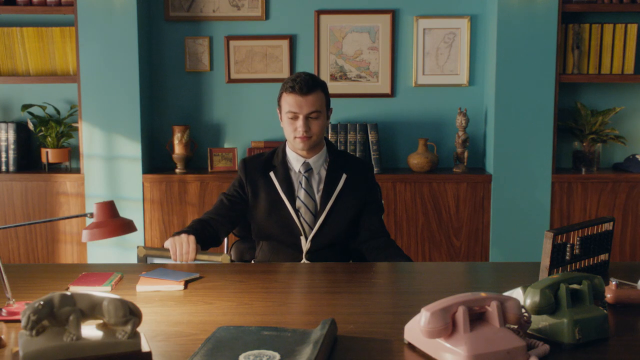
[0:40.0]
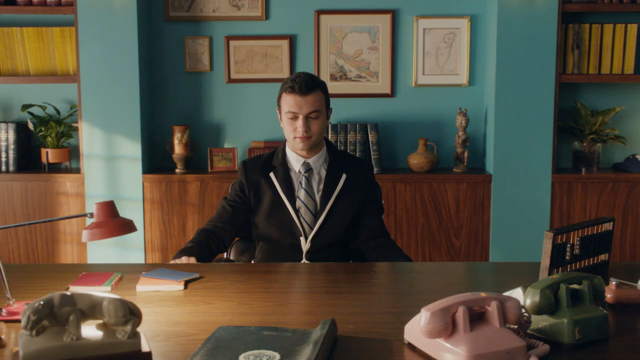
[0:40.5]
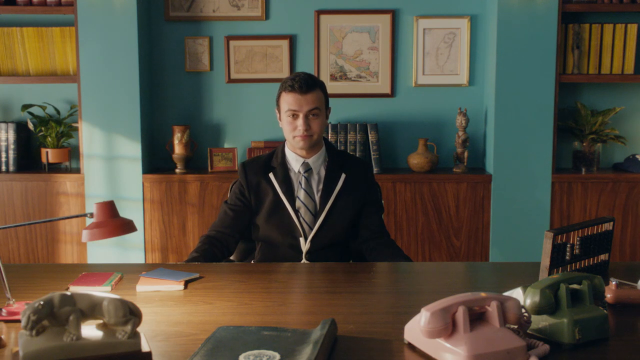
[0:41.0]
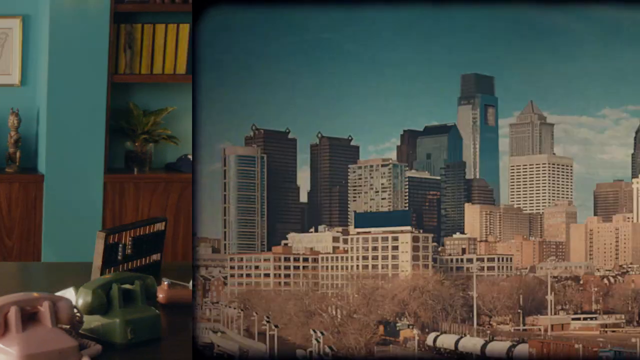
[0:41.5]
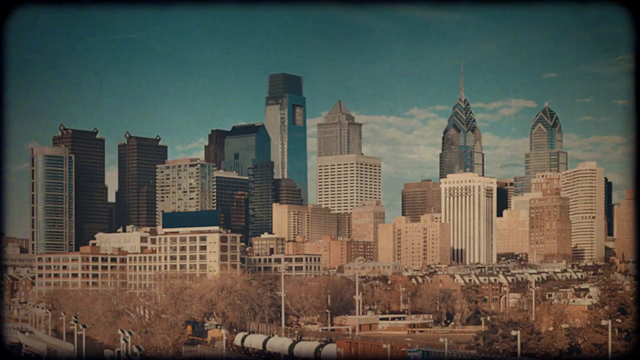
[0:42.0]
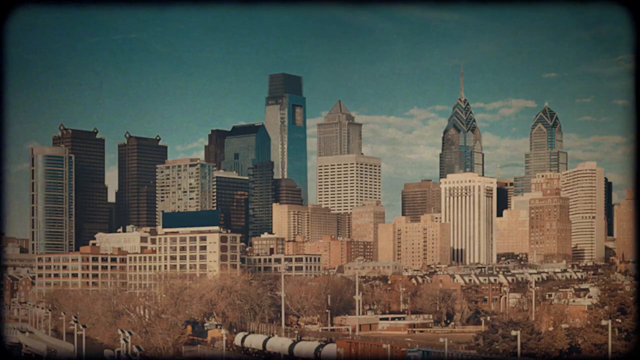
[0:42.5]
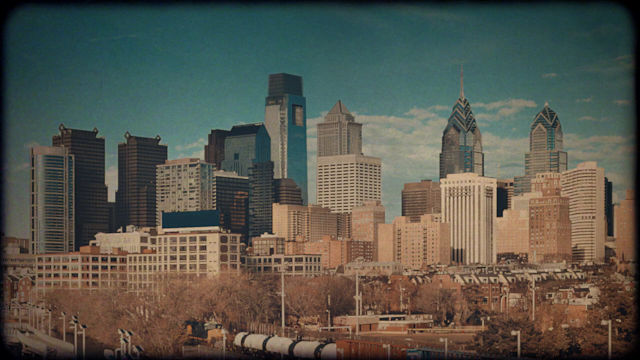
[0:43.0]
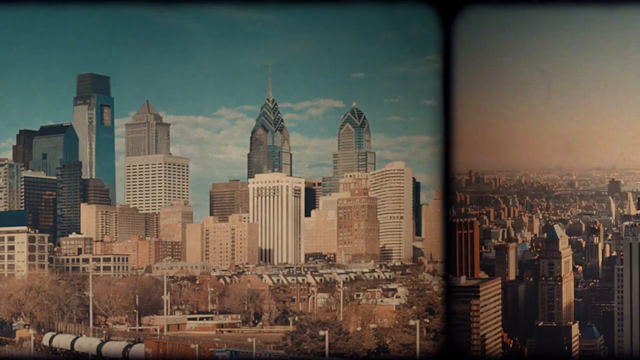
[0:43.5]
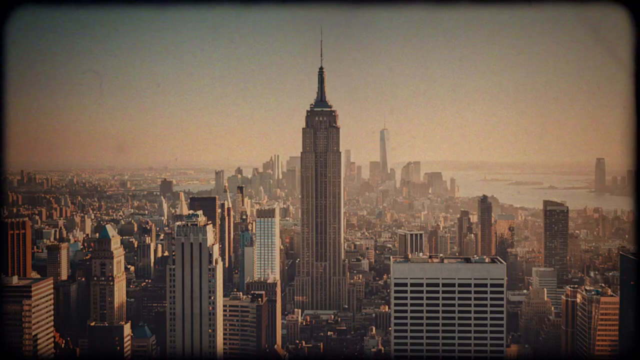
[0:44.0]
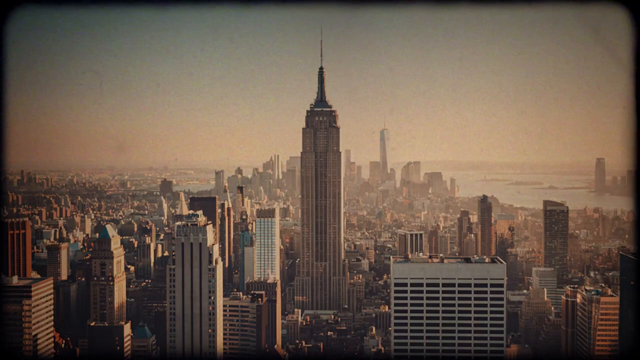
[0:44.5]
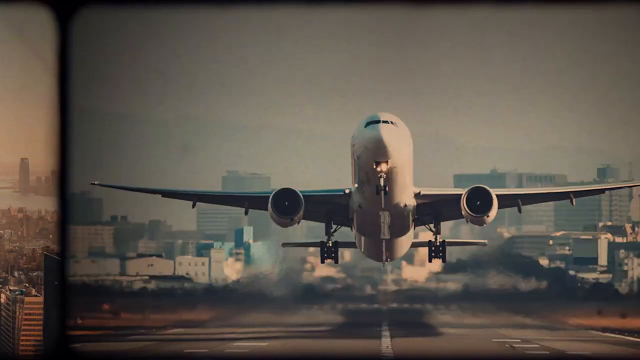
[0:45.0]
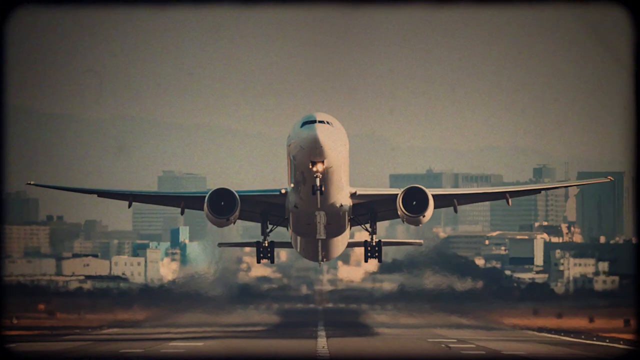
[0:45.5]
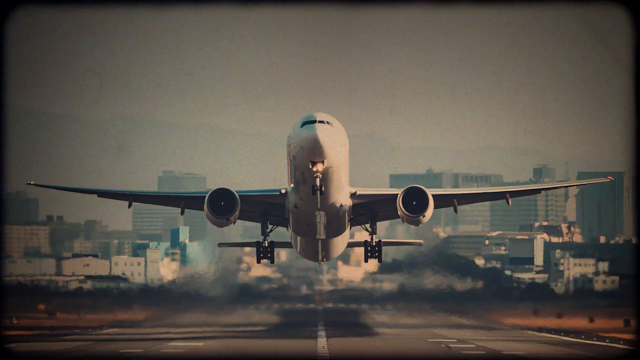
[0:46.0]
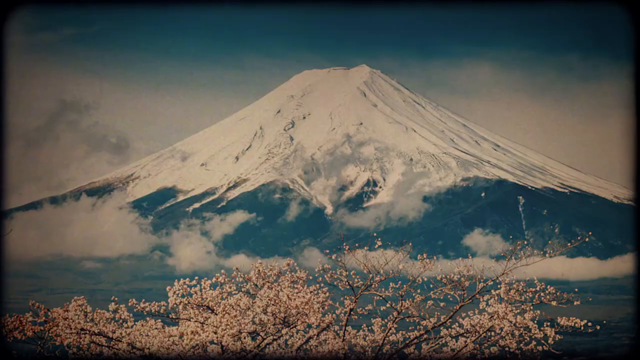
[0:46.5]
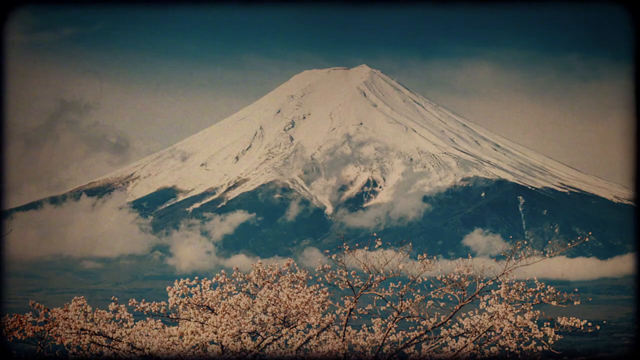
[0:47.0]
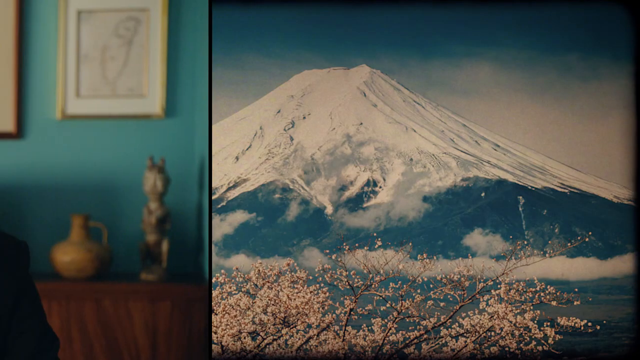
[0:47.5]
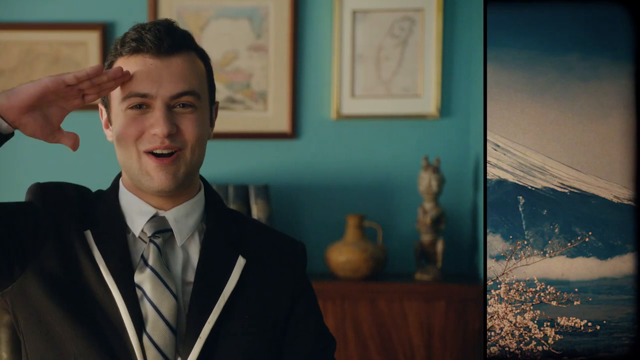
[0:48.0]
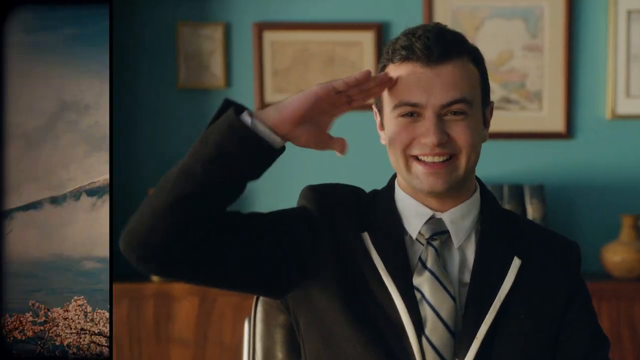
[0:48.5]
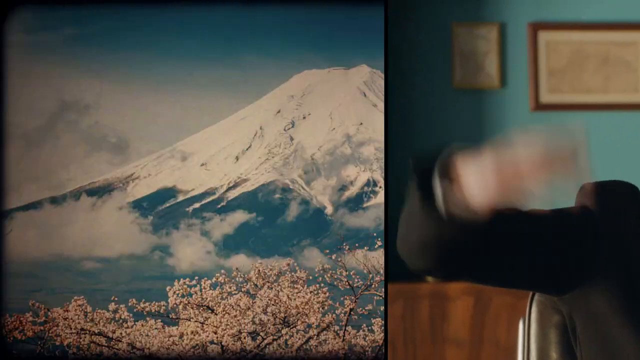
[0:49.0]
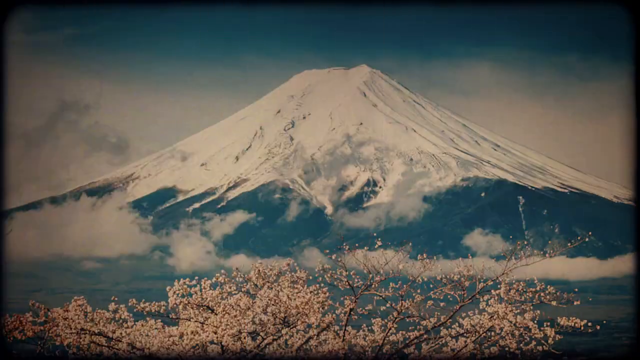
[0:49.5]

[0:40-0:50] An image of a bunch of buildings comes onto the screen: tall, shorter and medium-sized buildings in tan, light gray and dark gray, along with a few blue buildings and some white ones, all in different shapes and sizes. It looks like an industrial area, and the sky is a pretty blue with lots of clouds. The image changes to a different photo of hundreds of buildings on a dreary day, with a sky that is a light tan mixed with a little gray and blue at the top. The photo then changes to an airplane flying in the air, angled upwards toward the sky, that looks like it just took off, with a dreary gray sky and gray and white buildings in the back.